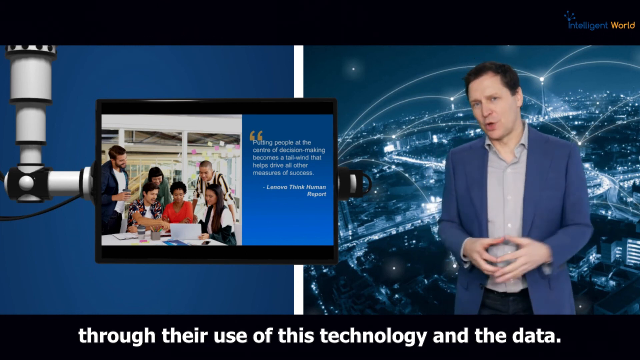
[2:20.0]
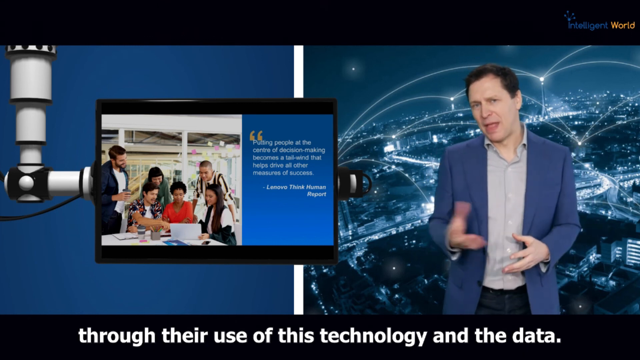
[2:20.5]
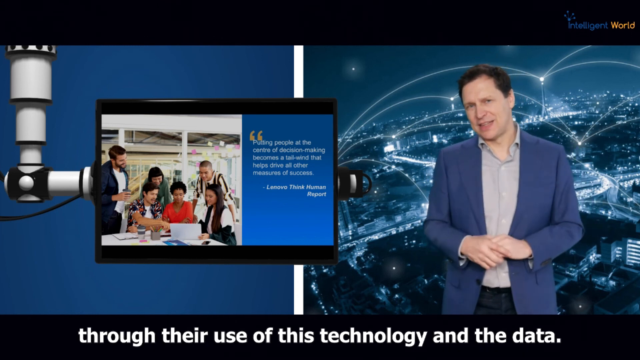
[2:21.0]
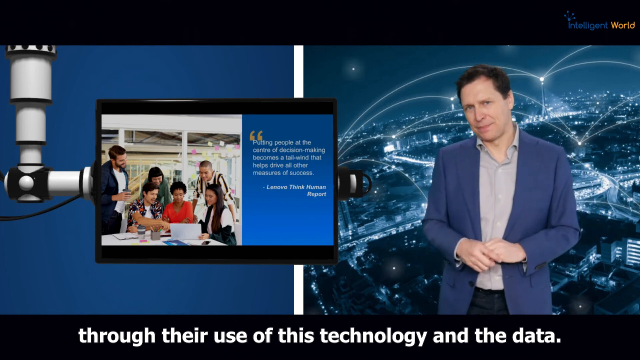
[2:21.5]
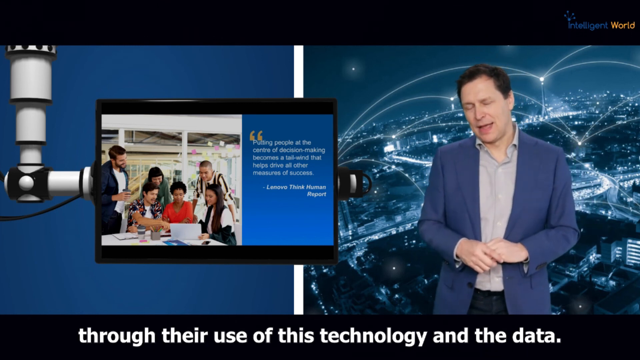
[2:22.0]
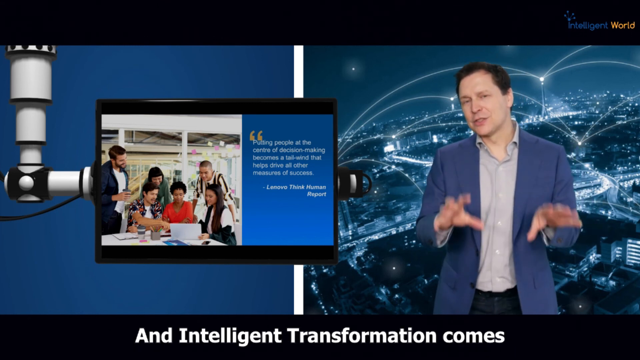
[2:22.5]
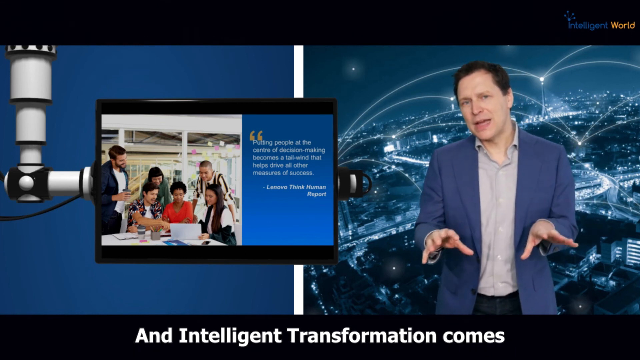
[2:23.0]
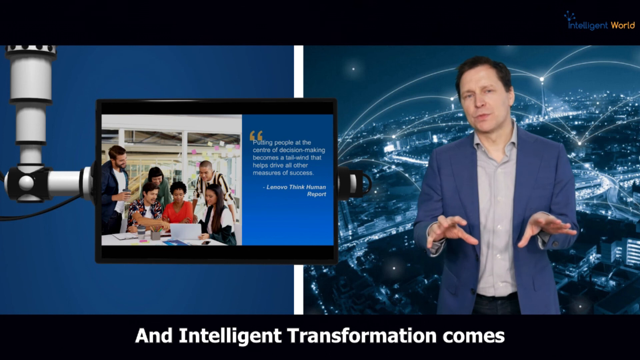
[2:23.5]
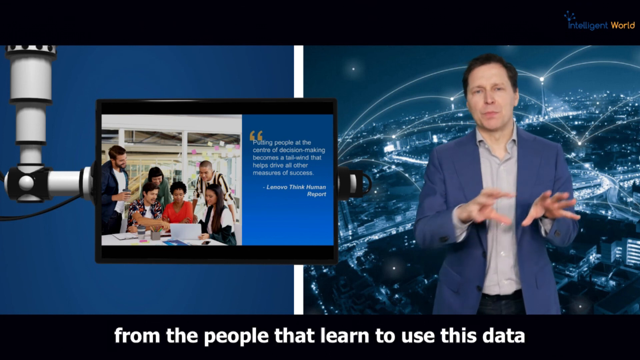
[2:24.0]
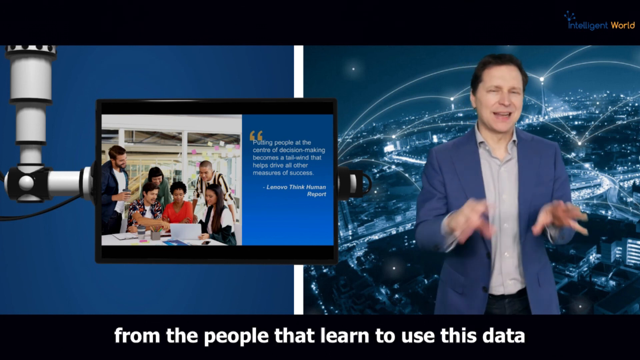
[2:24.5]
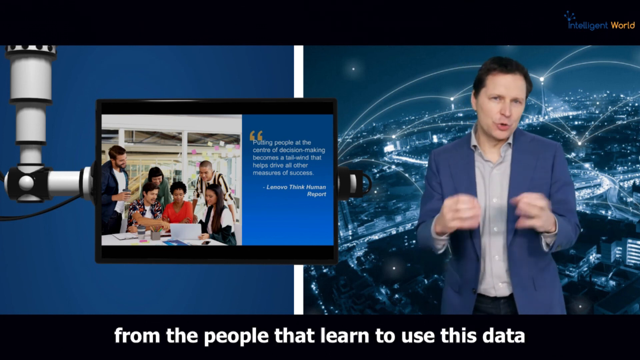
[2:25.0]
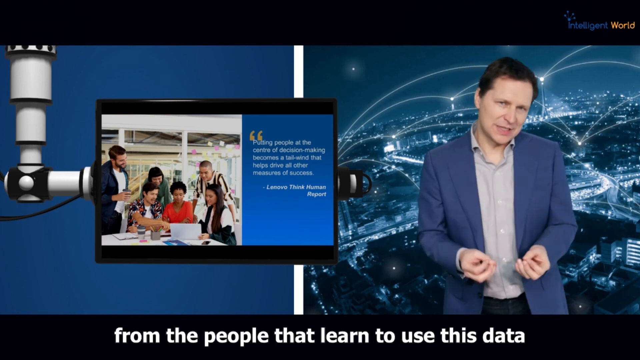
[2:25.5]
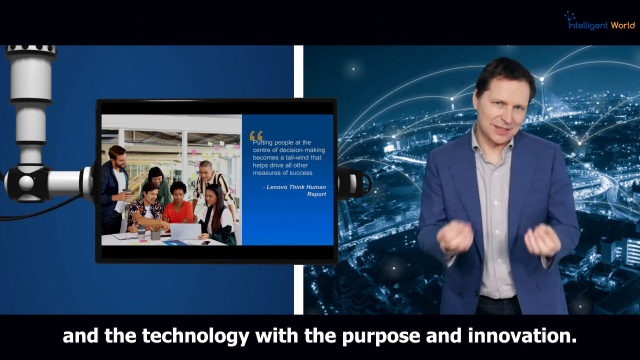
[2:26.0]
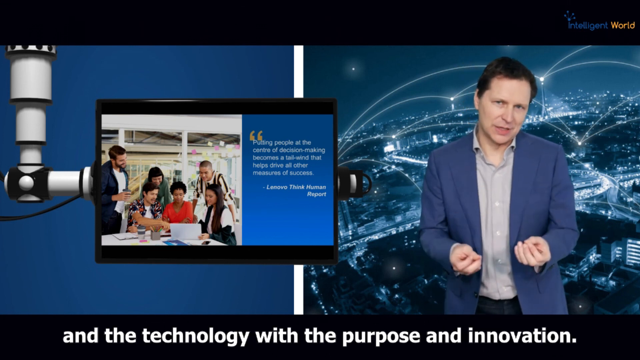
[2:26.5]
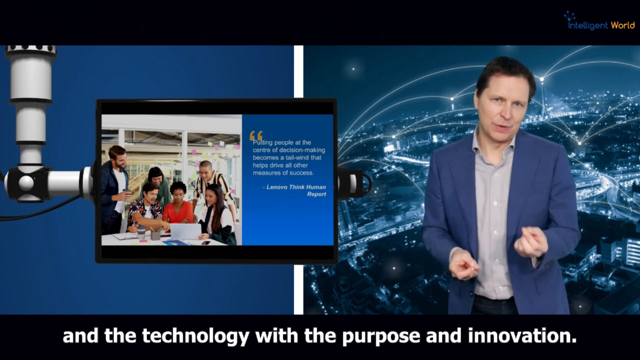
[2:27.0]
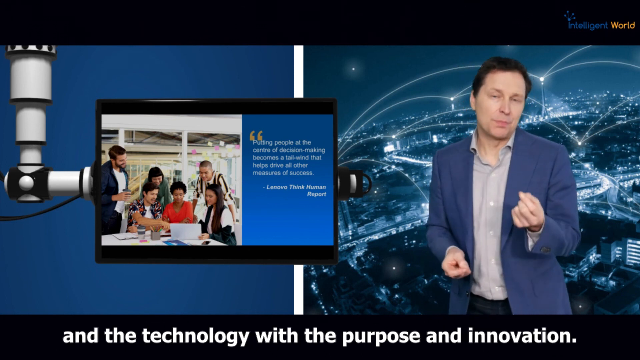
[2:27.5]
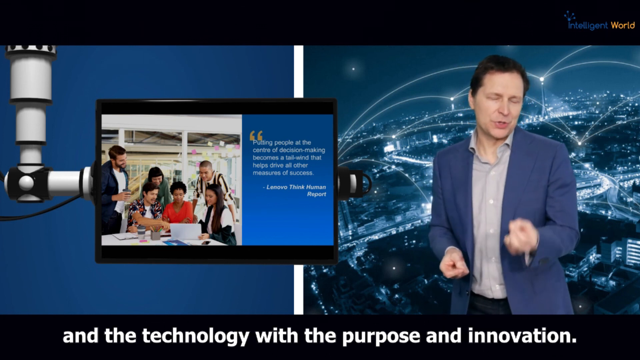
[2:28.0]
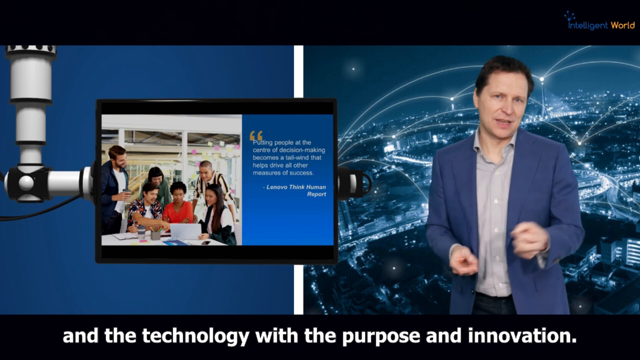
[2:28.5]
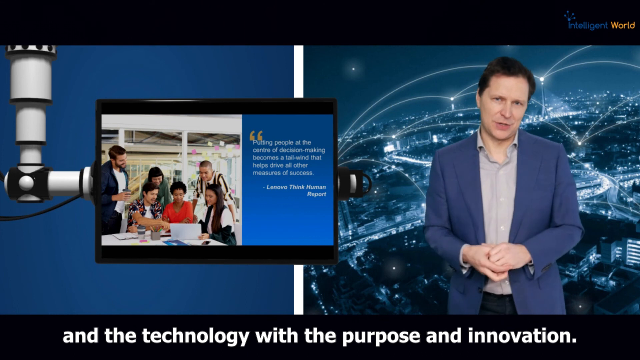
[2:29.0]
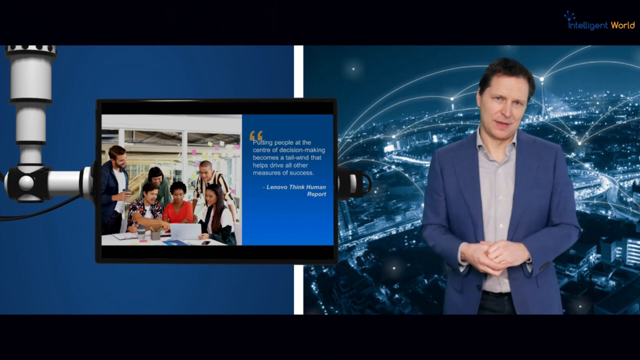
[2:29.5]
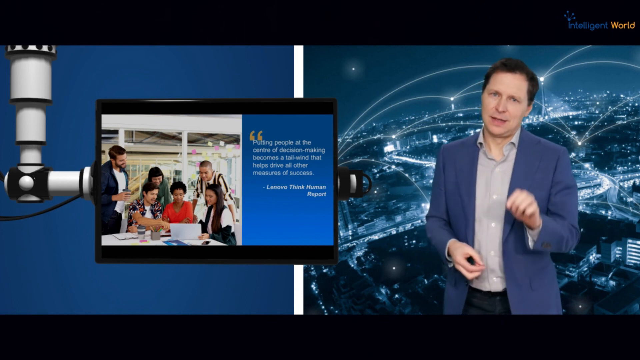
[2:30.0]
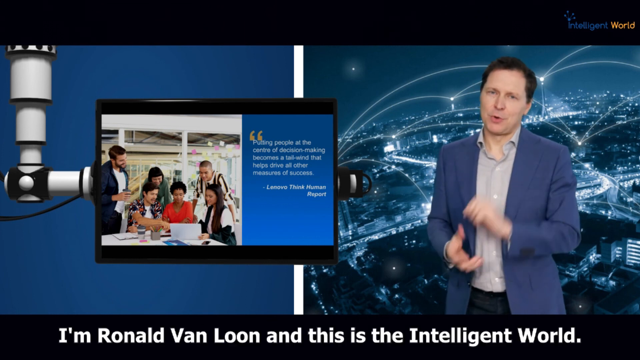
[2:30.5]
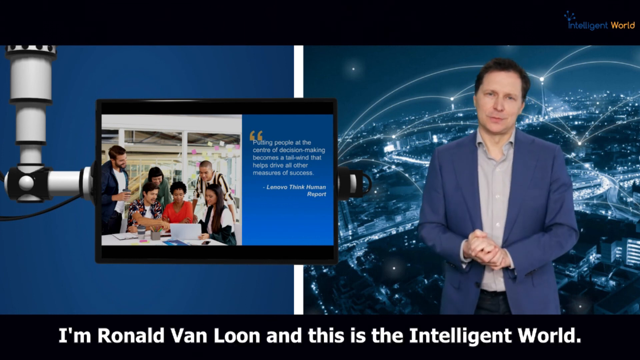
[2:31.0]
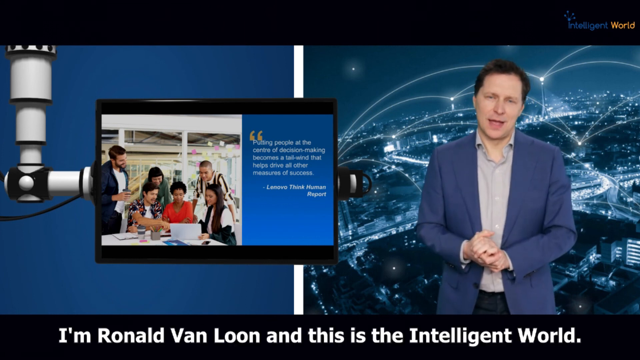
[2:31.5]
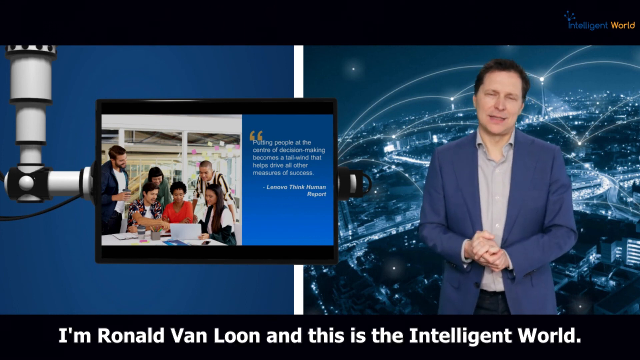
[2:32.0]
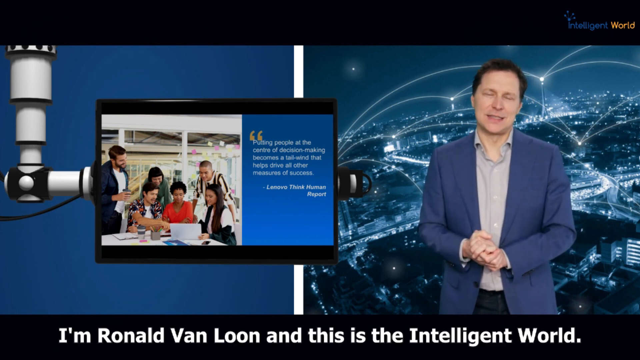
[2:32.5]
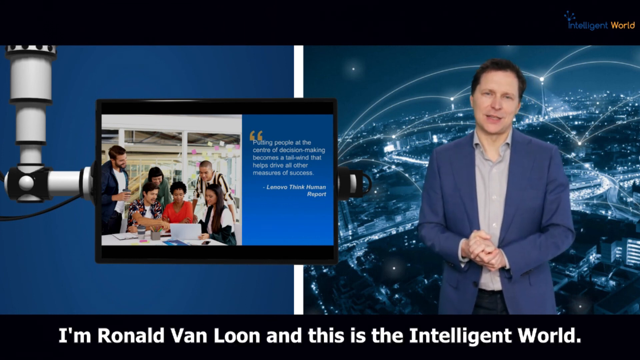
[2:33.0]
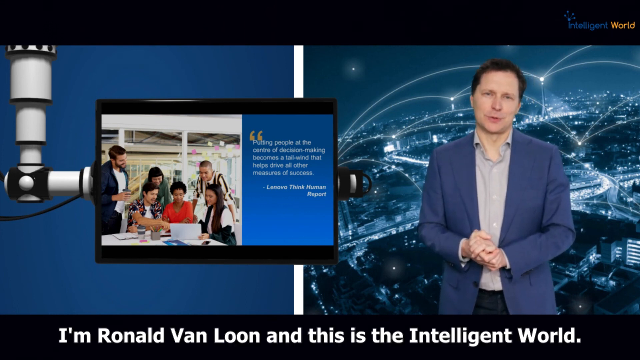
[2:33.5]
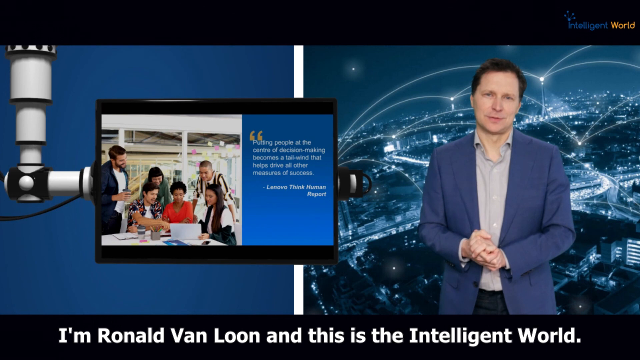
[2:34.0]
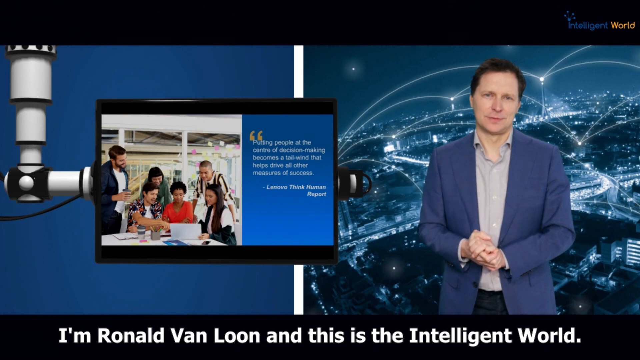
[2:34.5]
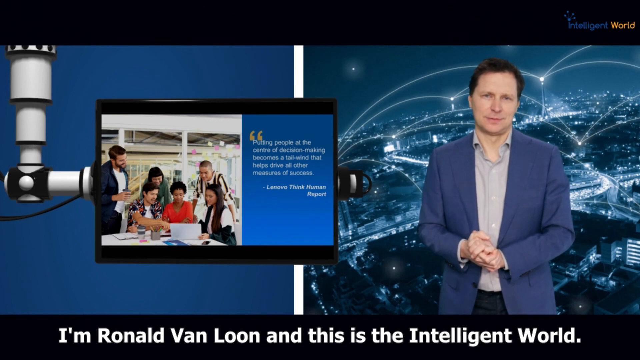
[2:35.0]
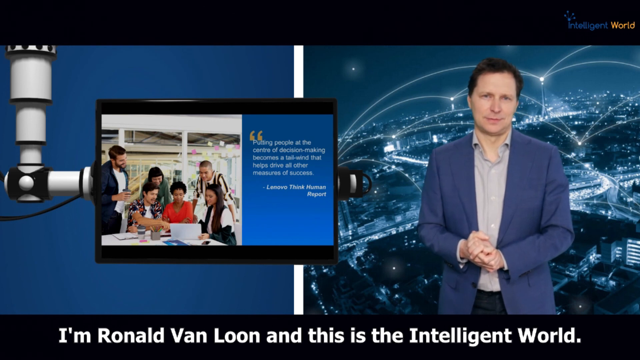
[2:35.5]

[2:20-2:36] A man continues giving the presentation as captions refer to technology, data and intelligent transformation, including the text "and the technology with the purpose and innovation." He says "I am Ronald Van Loon, and this is the intelligent world." The Intelligent World logo is in the upper right-hand corner: "Intelligent" is blue and "World" is kind of a gold yellowish color, with some type of graphic above the "I." He seems to be wrapping up, apparently speaking more slowly; his hands are no longer moving and are held closed together. The last slide, the quote from the Lenovo Think Human Report, is still visible as he finishes.